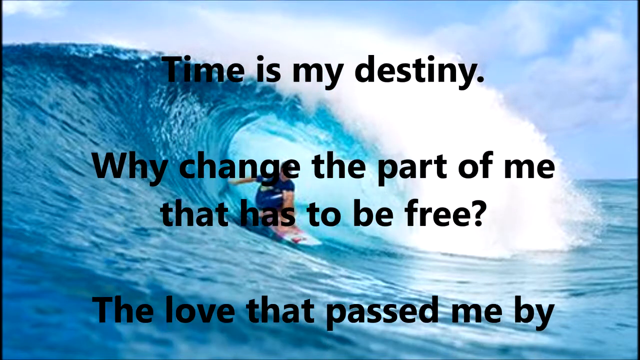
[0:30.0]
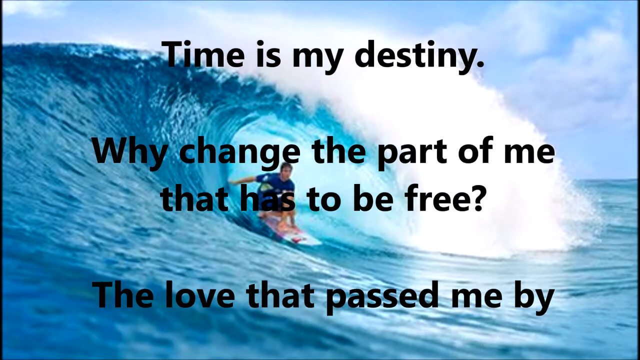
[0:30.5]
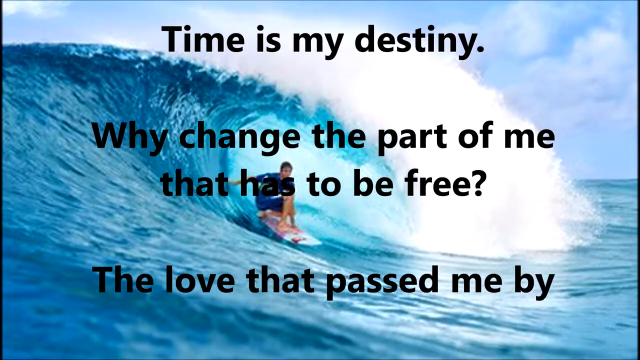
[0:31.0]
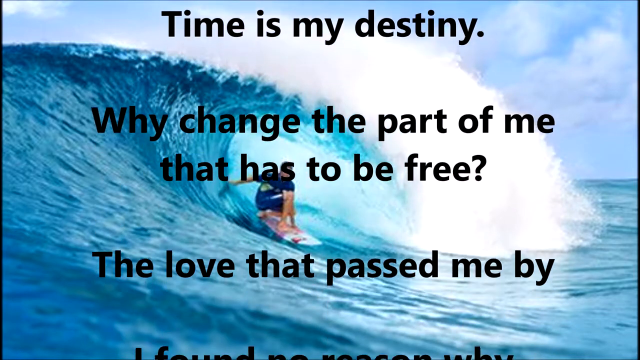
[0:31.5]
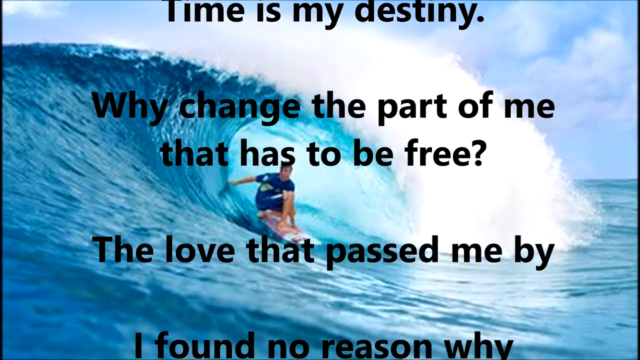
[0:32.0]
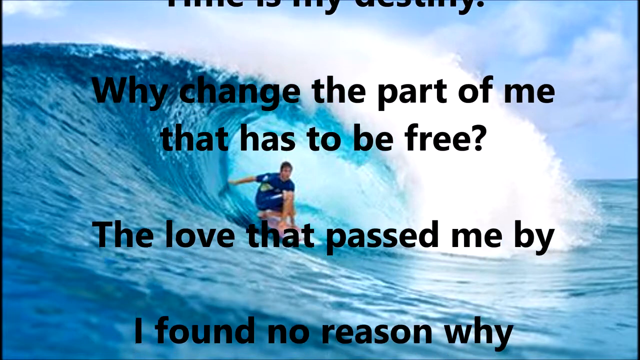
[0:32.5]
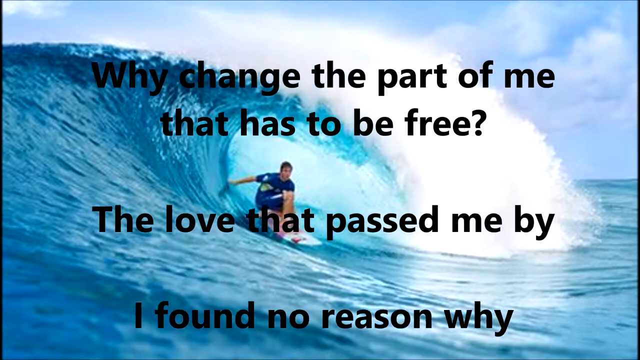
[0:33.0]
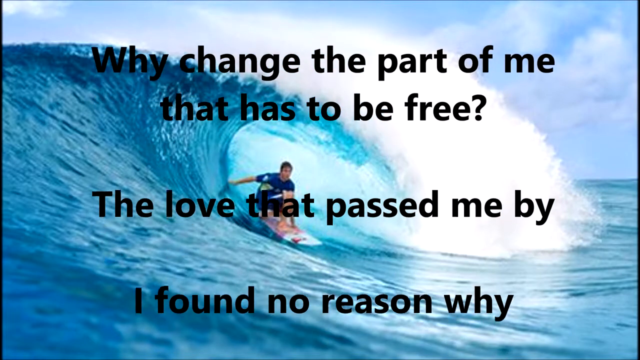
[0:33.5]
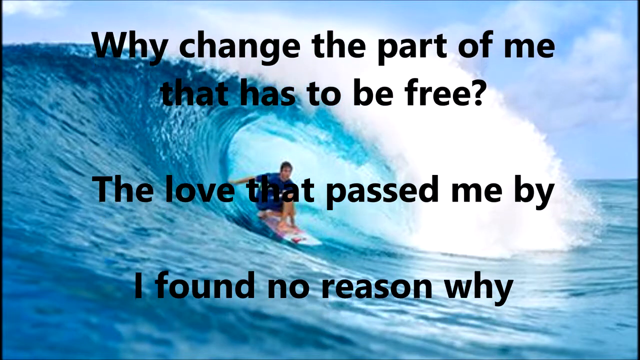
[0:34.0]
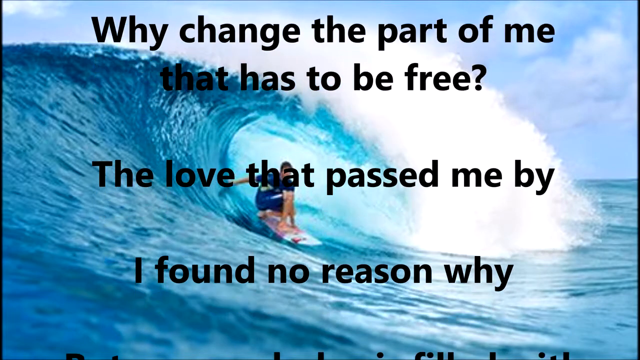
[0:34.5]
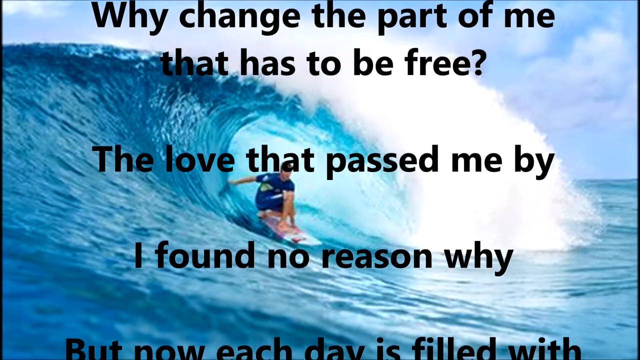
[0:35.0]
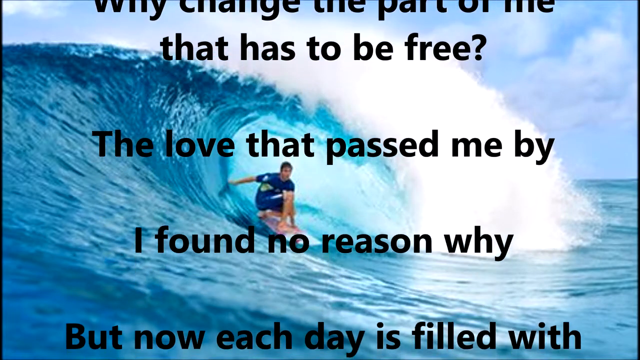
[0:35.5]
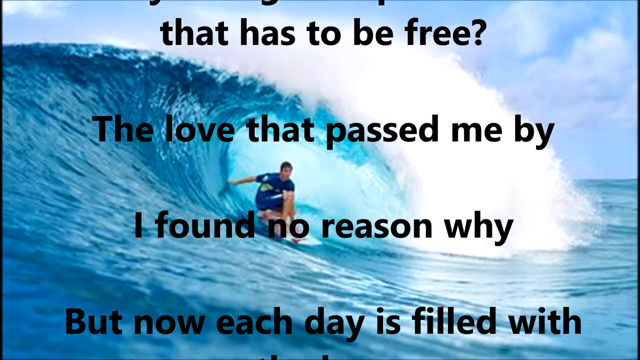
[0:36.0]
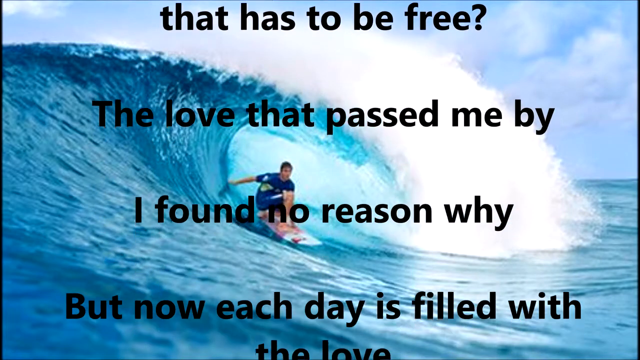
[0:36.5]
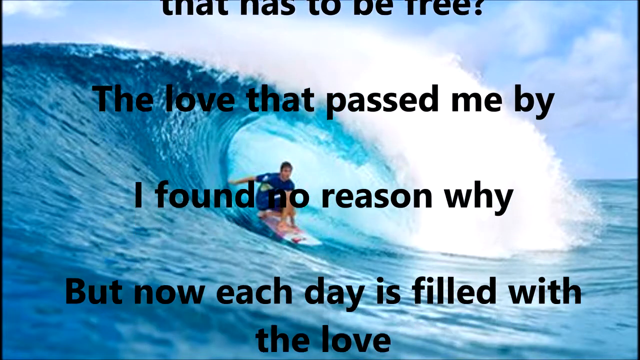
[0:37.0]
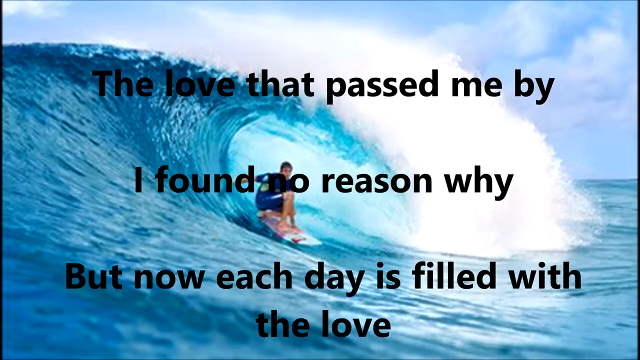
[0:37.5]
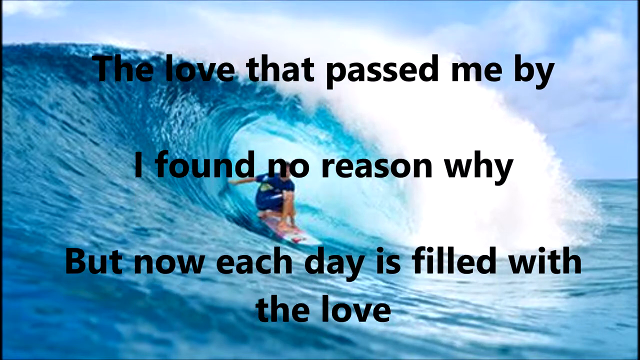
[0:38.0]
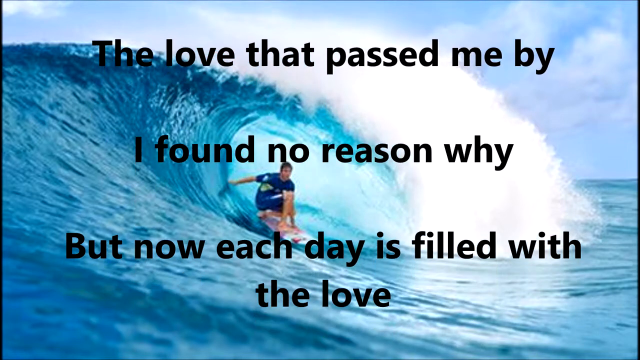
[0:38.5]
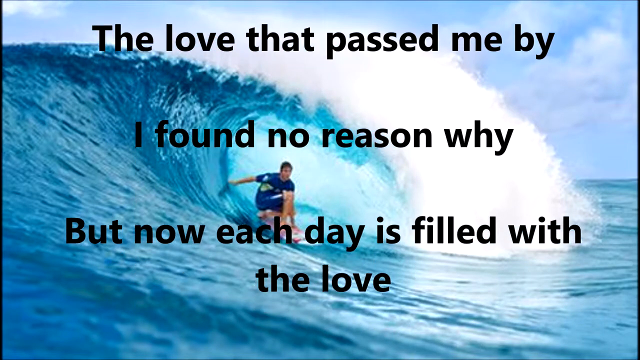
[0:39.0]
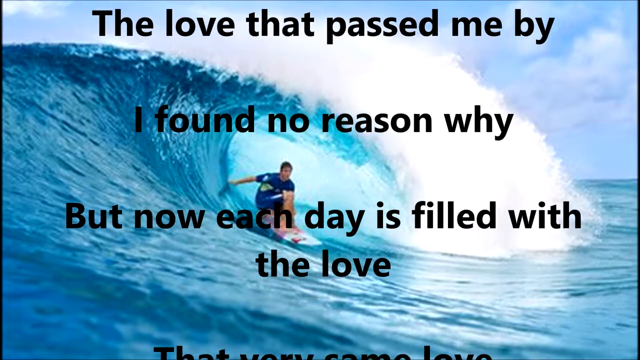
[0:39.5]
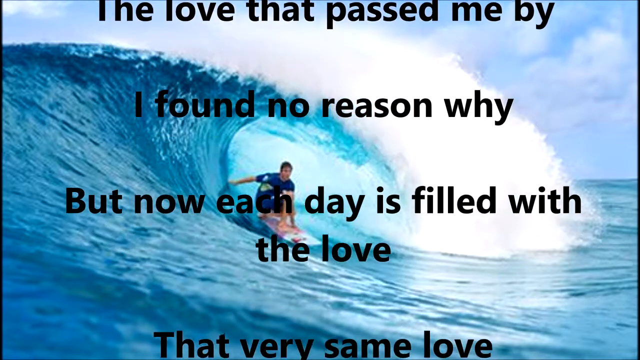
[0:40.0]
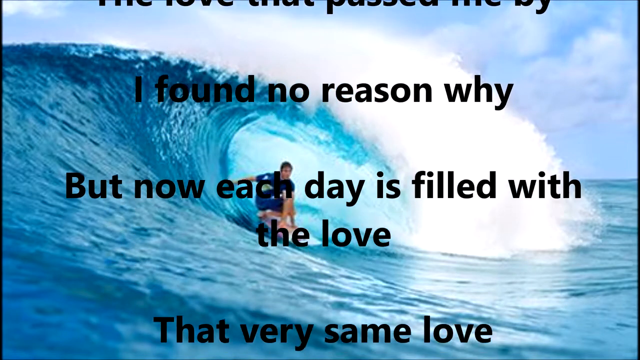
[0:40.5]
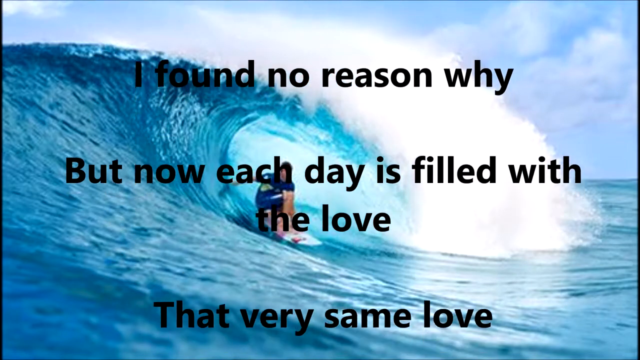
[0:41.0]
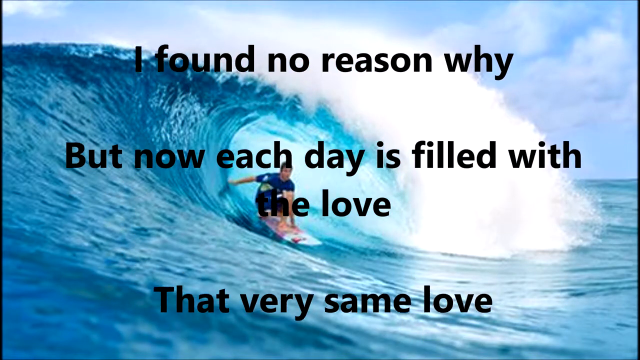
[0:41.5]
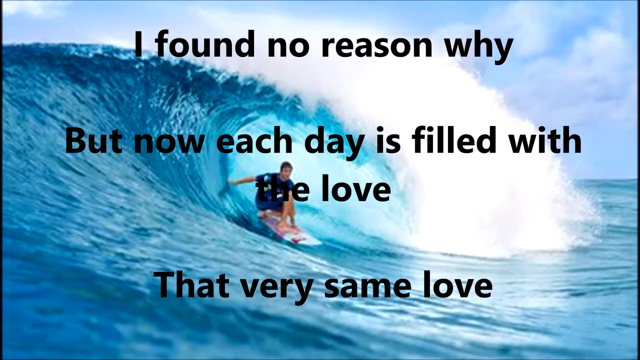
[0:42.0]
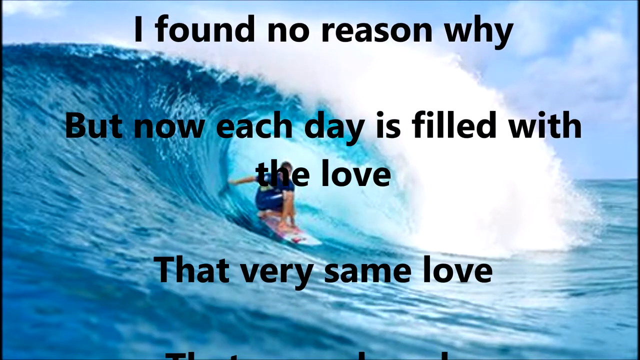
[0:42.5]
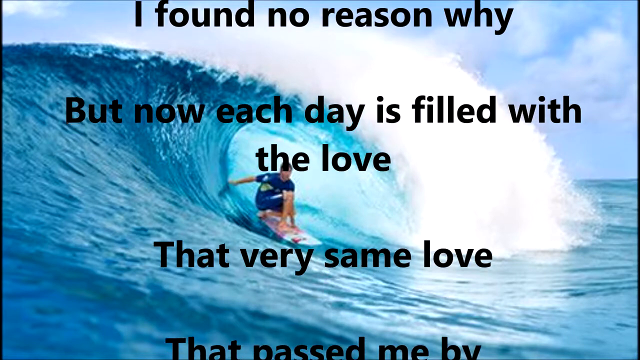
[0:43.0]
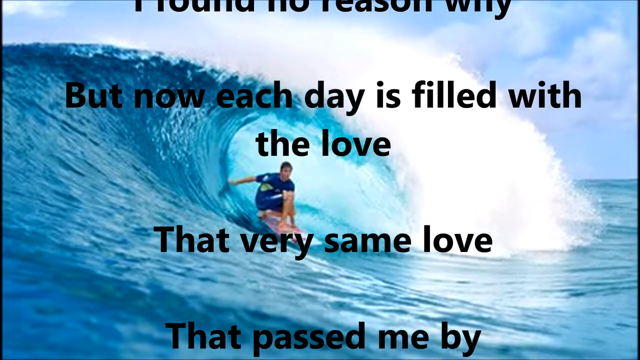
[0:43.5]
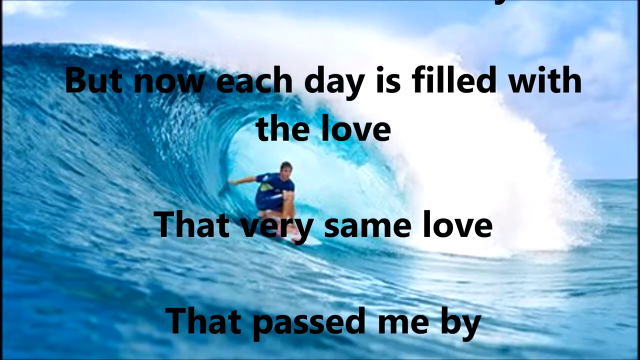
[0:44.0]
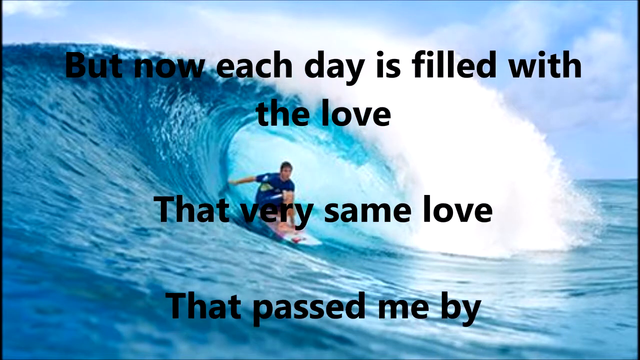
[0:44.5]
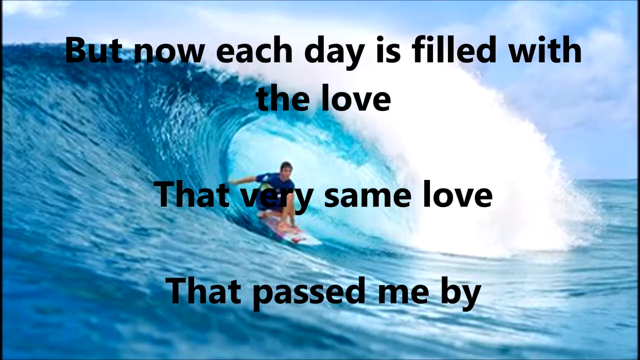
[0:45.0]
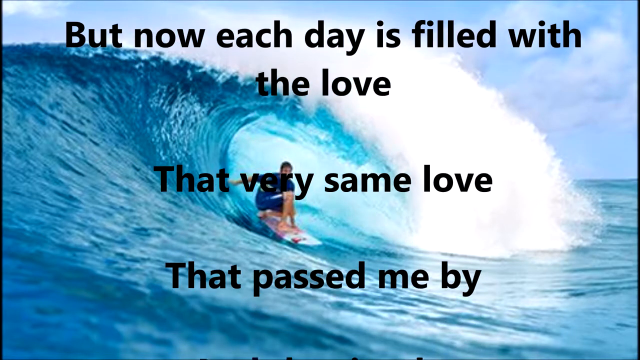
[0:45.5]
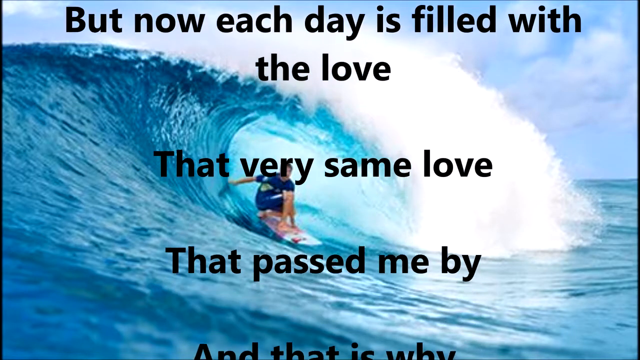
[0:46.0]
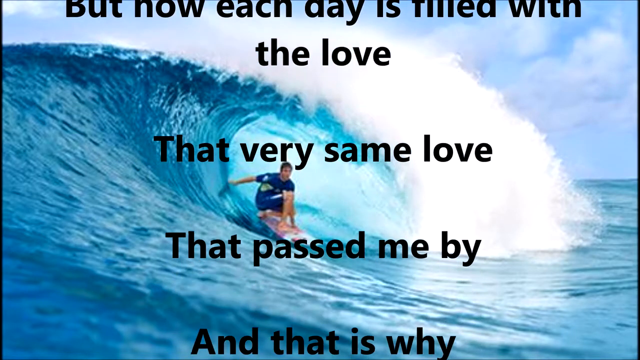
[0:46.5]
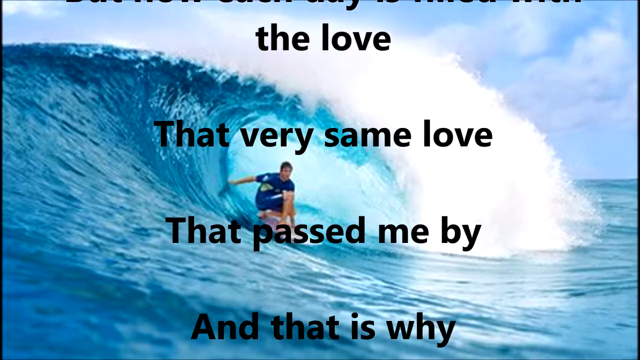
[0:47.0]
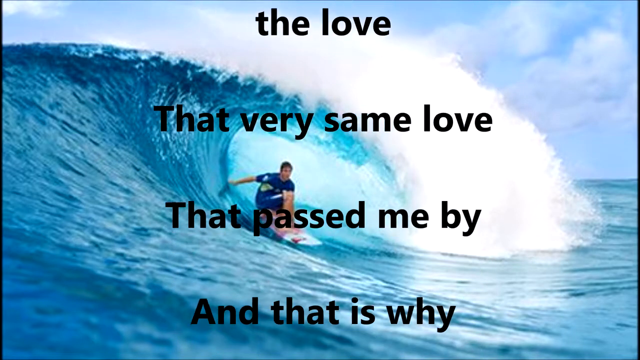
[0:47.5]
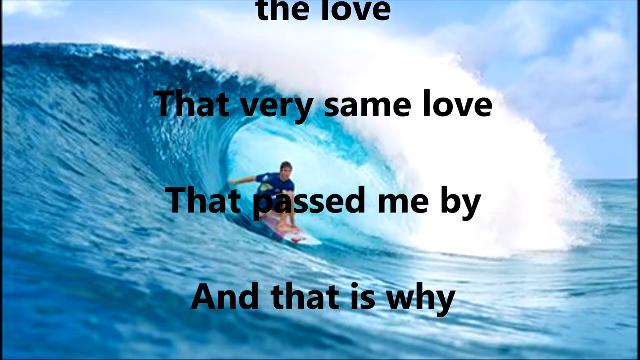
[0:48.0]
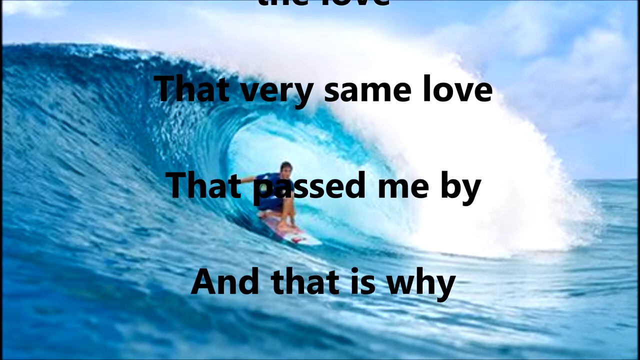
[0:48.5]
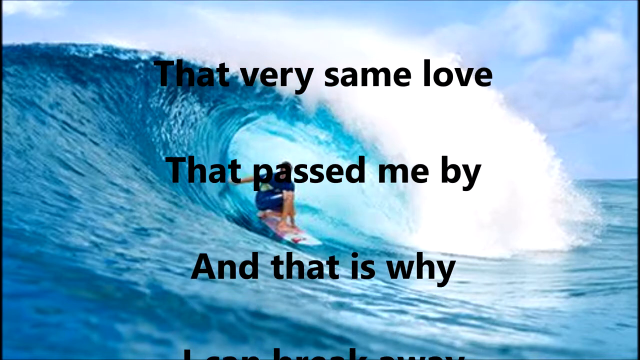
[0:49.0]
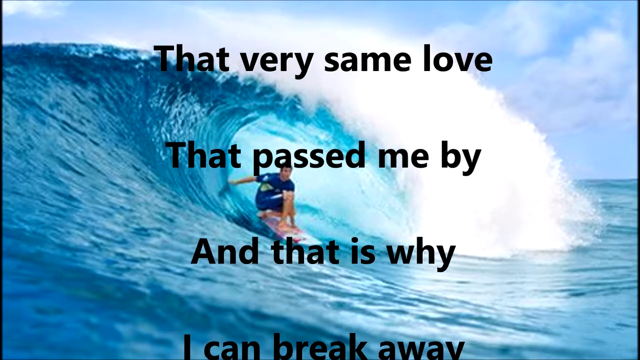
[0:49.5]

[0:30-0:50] The text continues, and as each new line pops up, a line at the top disappears. The next lines read "The love that passed me by I found no reason why / But now each day is filled with the love / That very same love that passed me by / And that is why," and the text seemingly continues. The whole time, the static image of the surfer stays in the background without changing at all. The text is large, with only three to four lines fitting on the screen at a time. Except where the black text passes through the darker colors of the water, it stands out strongly against all the blue of the background image.